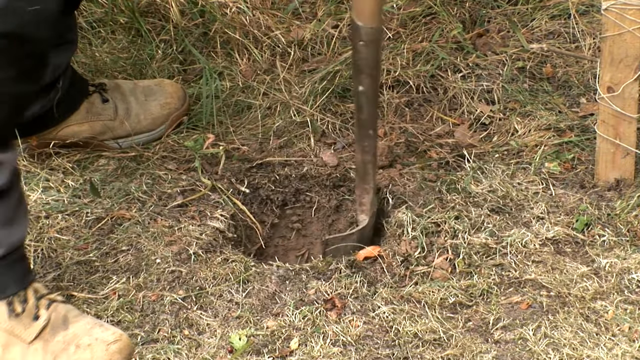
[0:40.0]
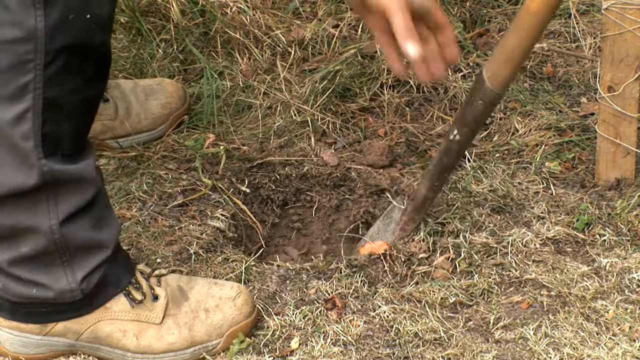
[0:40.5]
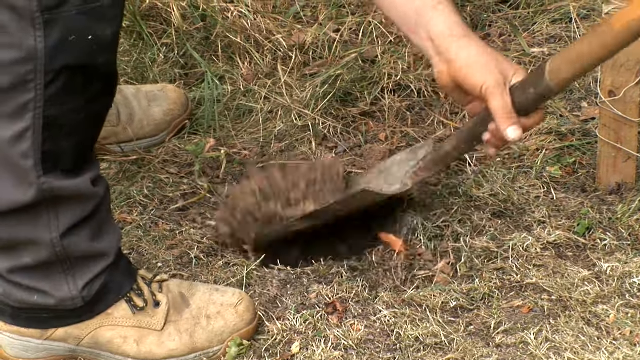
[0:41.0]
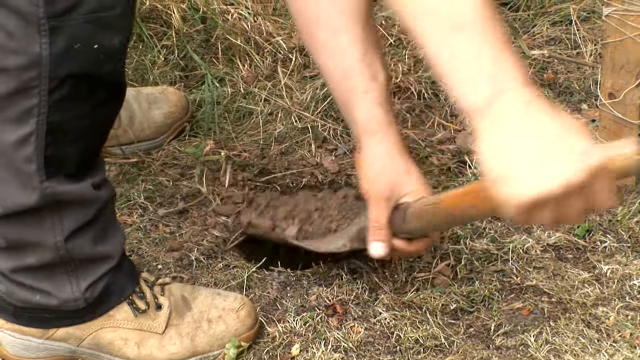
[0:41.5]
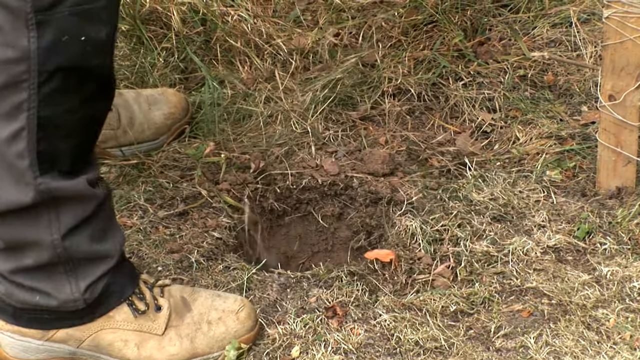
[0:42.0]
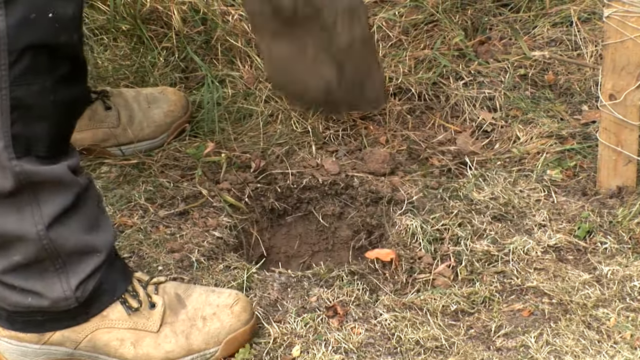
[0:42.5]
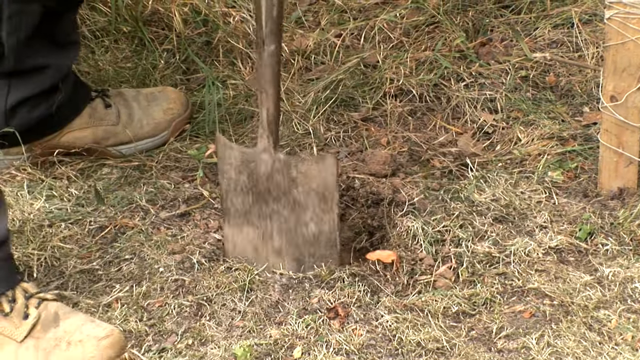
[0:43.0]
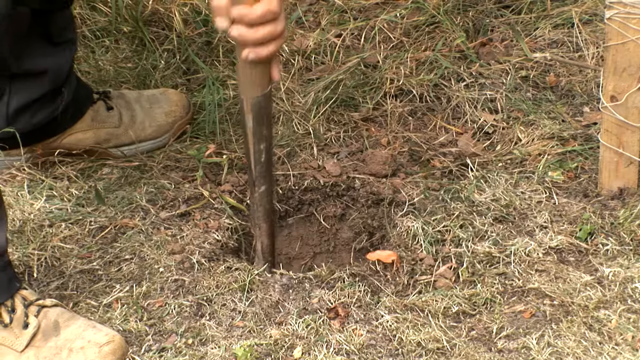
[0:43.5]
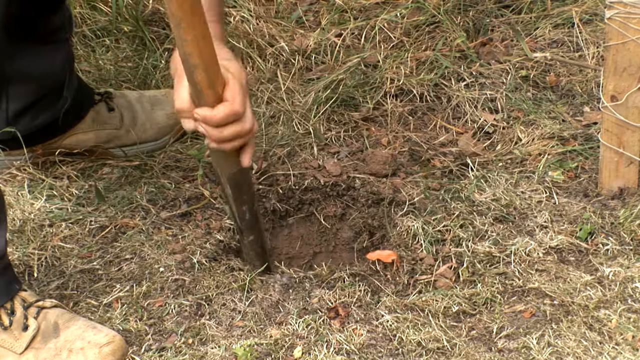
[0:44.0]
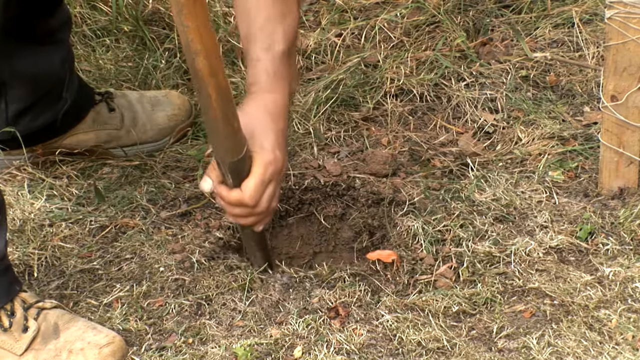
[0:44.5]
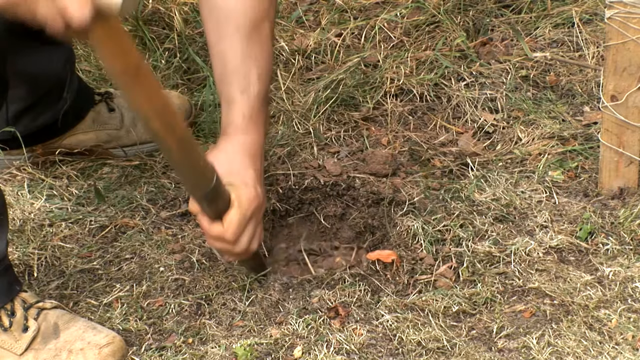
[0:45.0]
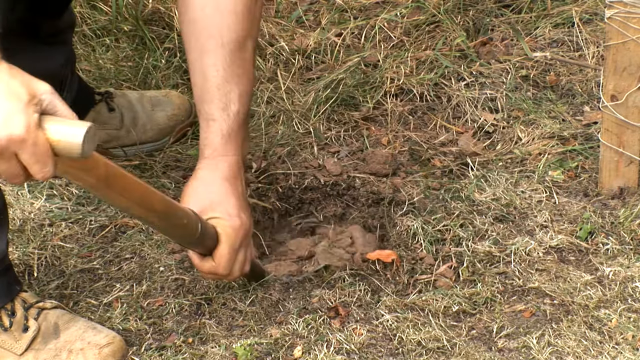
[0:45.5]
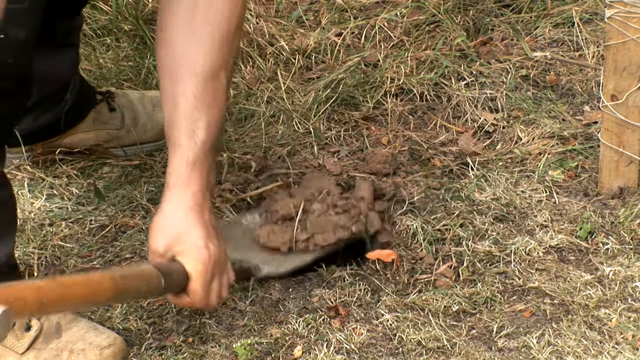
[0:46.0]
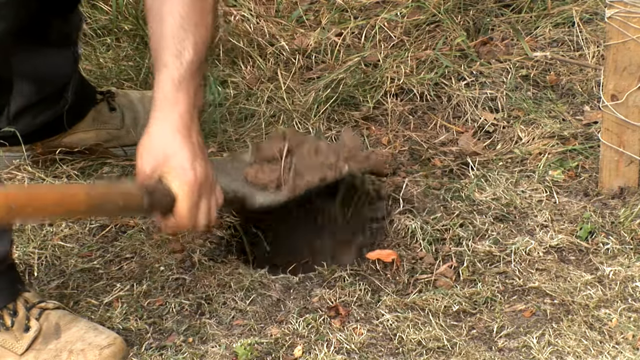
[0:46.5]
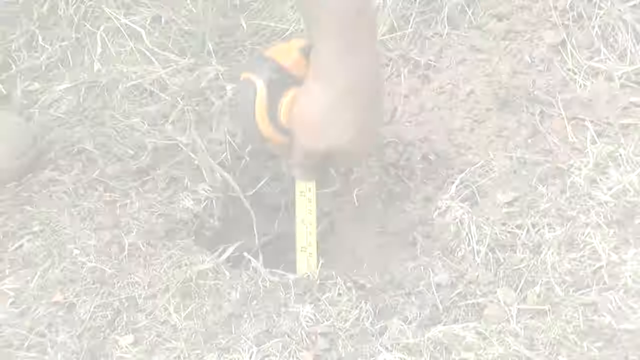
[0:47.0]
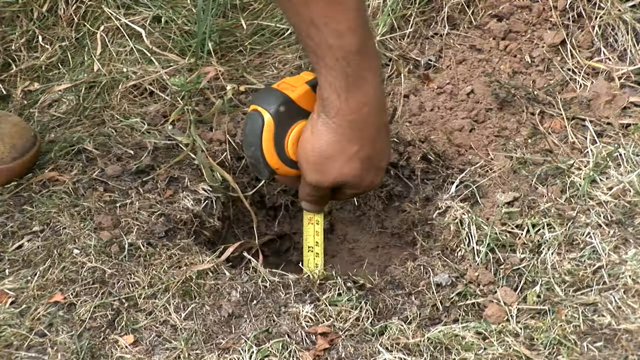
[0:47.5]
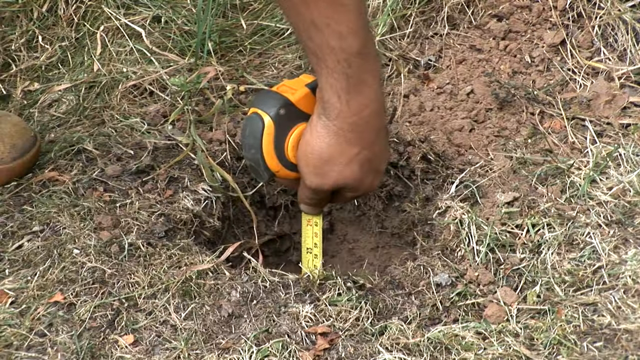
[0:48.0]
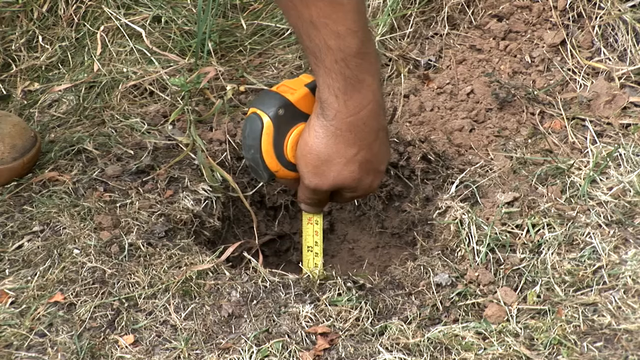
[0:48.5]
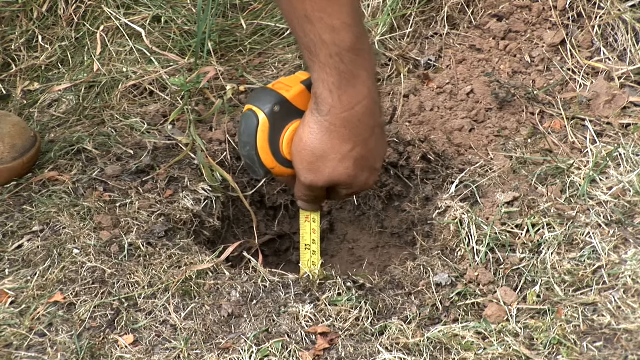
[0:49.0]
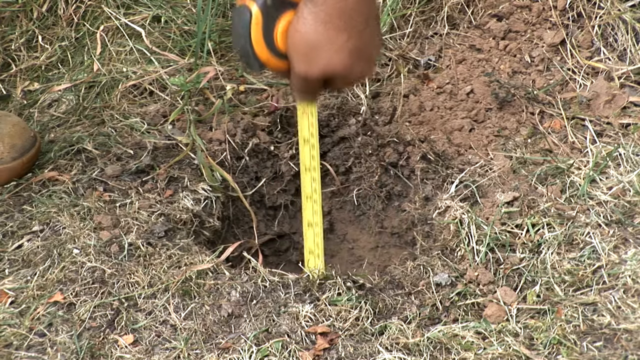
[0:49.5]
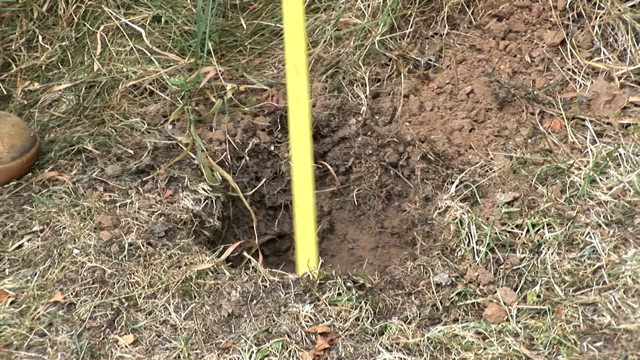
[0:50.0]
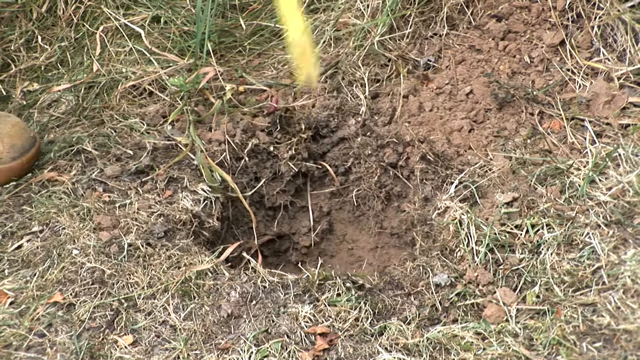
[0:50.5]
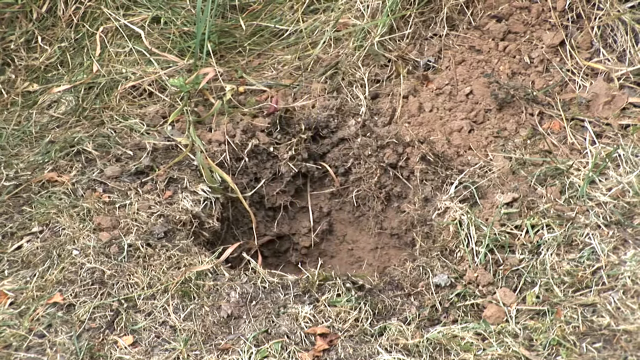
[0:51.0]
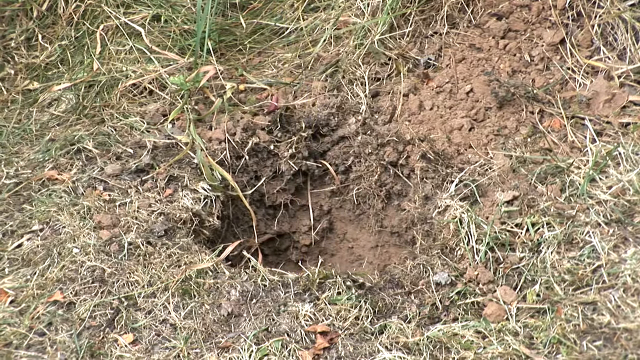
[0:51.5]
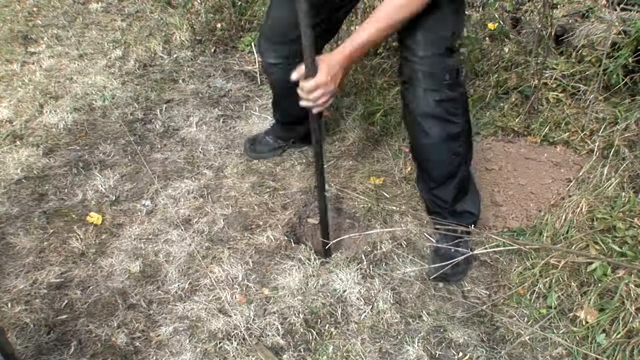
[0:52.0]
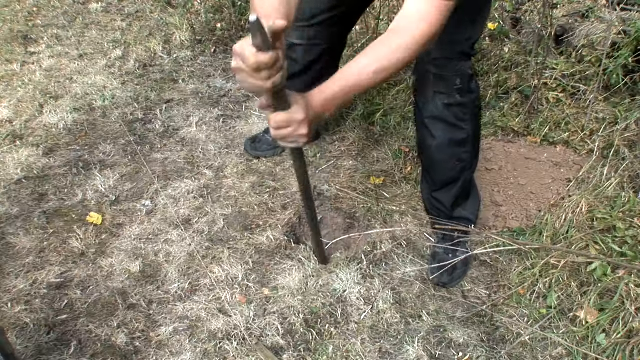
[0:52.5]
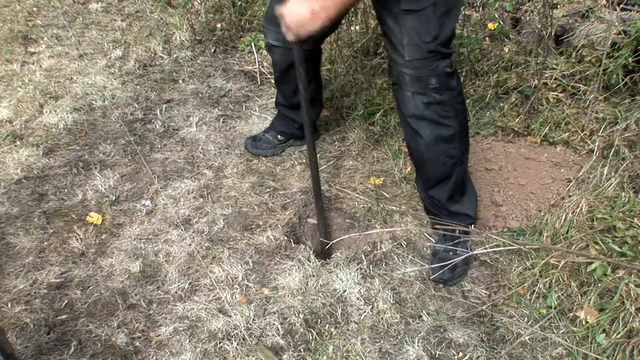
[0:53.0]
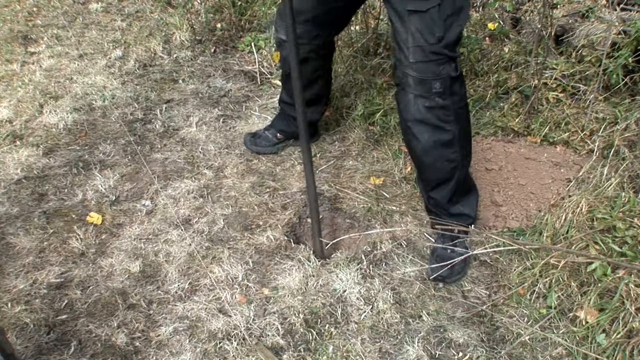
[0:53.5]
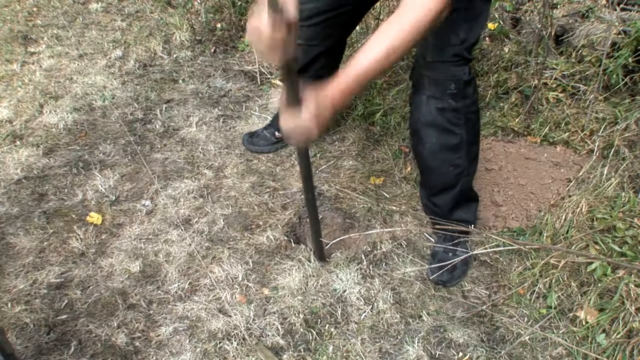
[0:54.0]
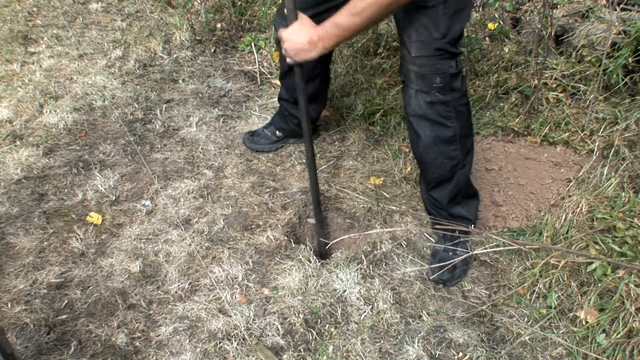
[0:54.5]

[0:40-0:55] Someone in black pants and brown boots digs a hole in the ground with a brown spade, taking a couple of scoops of dirt out to clean up the hole. The person then sticks a black and orange tape measure into the hole to measure how deep it is. A man in black pants then takes a large black pole, sticks it in the hole and bangs it down to make the hole deeper. The man with the pole wears black boots, so there appear to be two different people. The ground looks dry: there is some green grass, but most of the grass is brown and dead, and the soil does not look too soft.